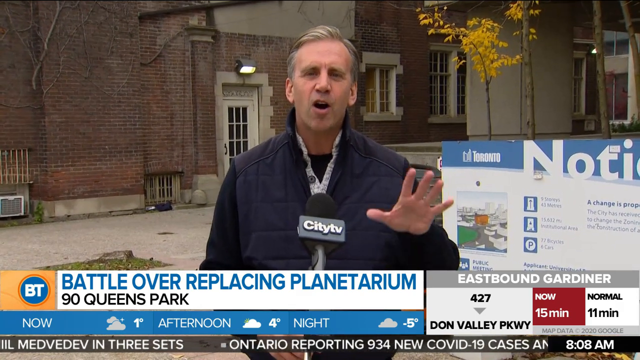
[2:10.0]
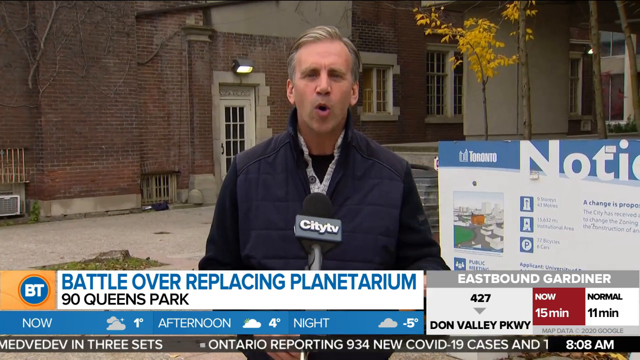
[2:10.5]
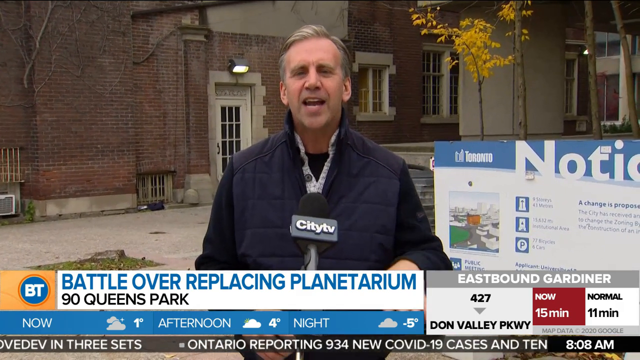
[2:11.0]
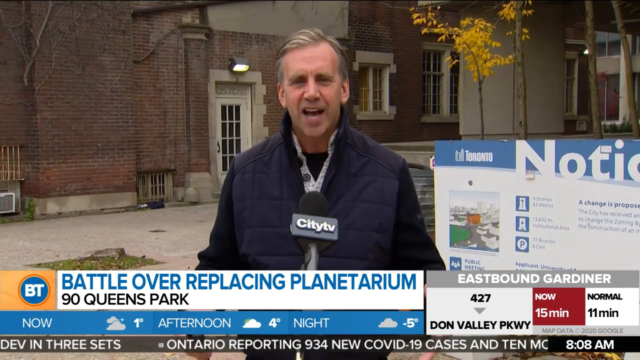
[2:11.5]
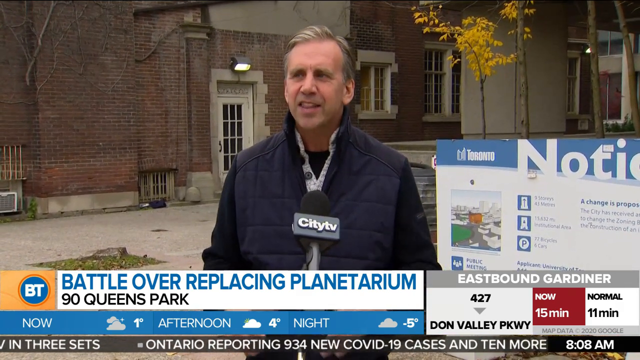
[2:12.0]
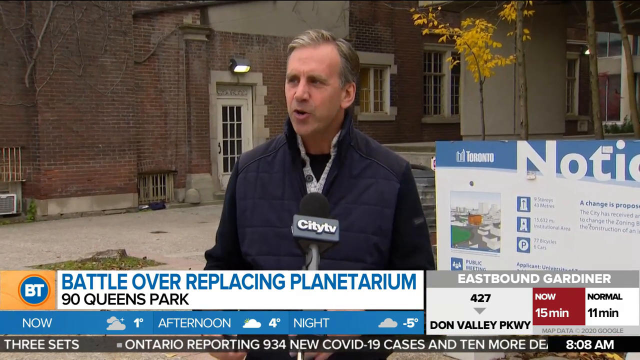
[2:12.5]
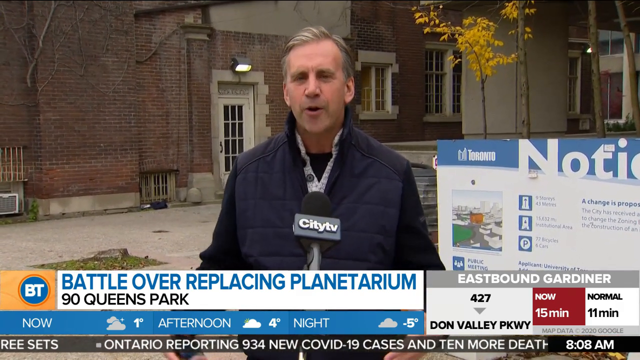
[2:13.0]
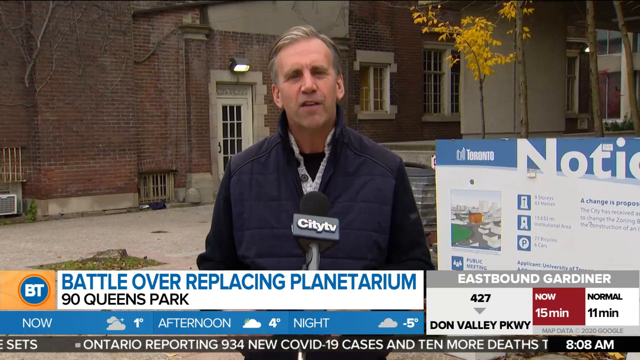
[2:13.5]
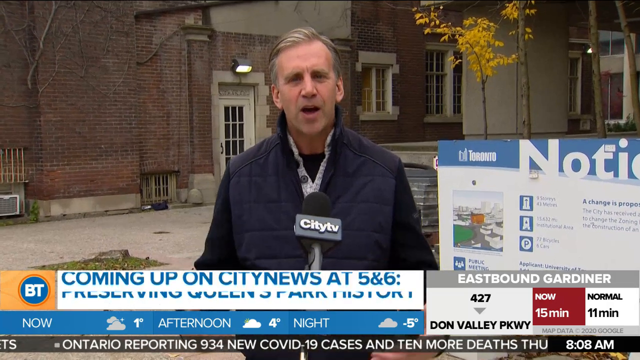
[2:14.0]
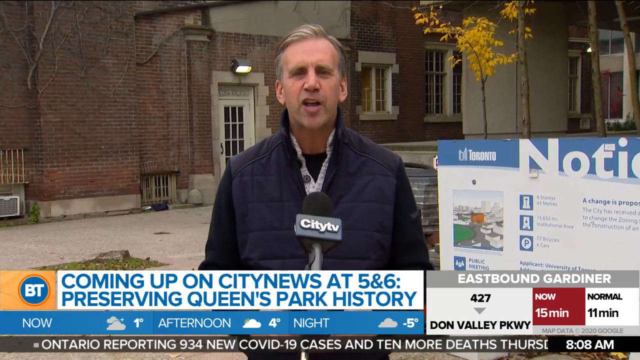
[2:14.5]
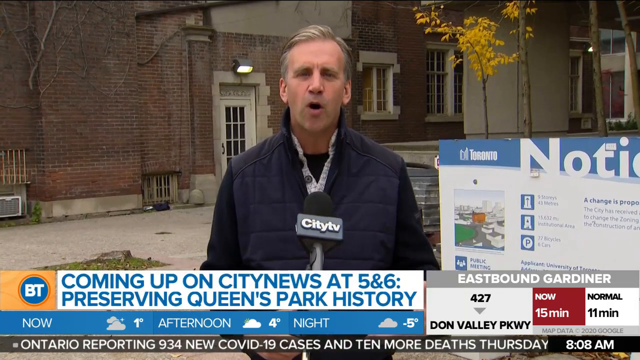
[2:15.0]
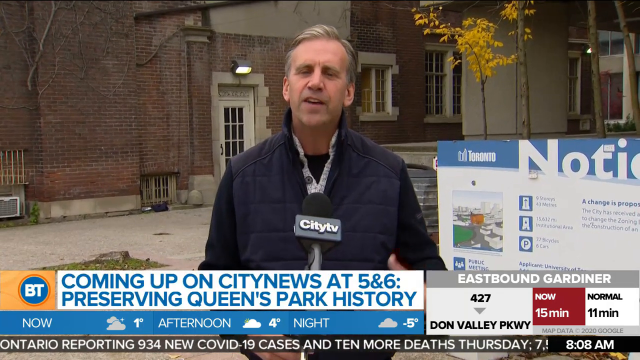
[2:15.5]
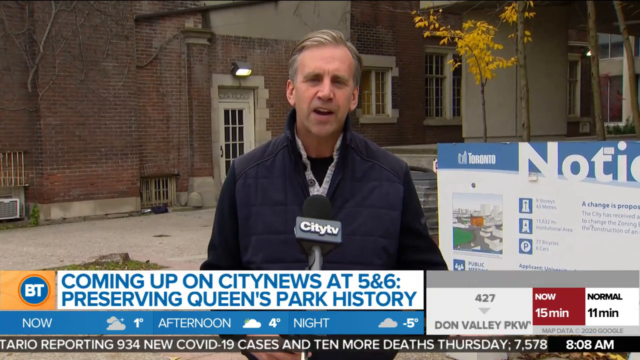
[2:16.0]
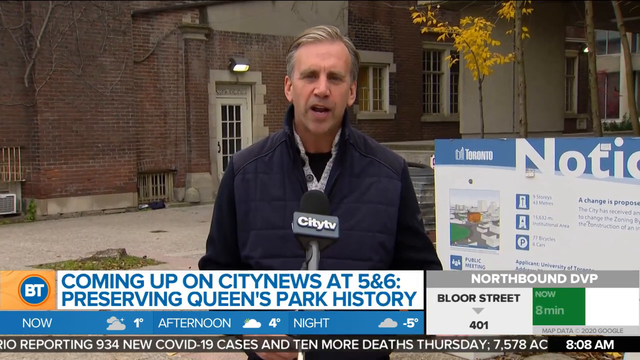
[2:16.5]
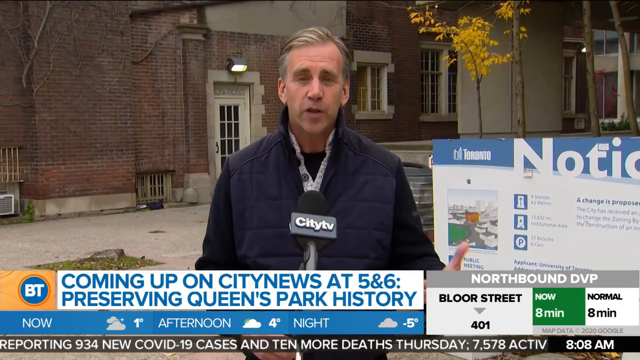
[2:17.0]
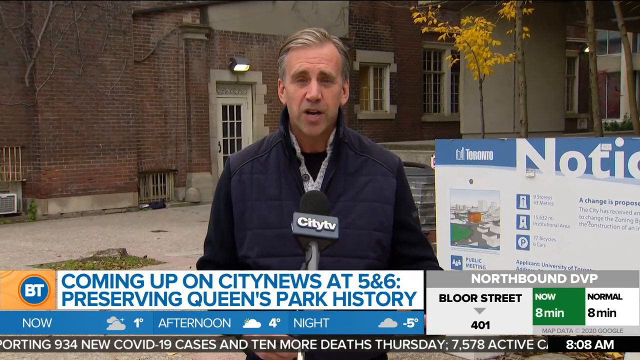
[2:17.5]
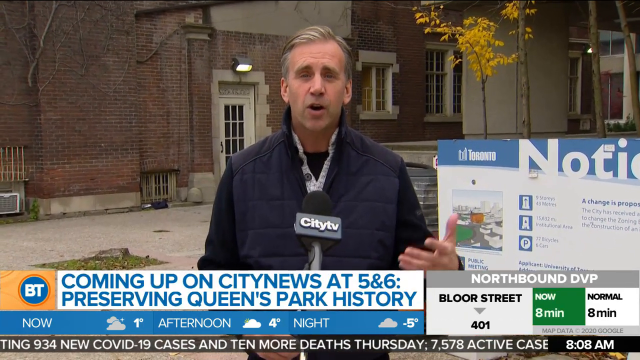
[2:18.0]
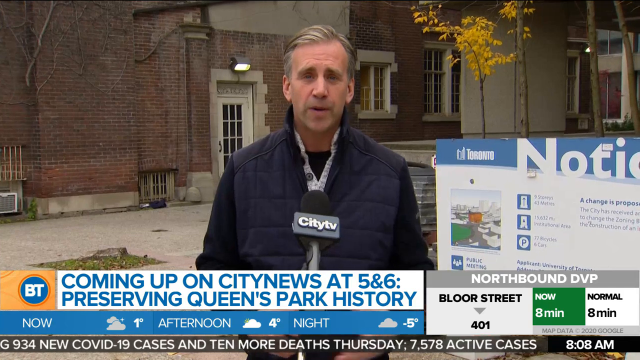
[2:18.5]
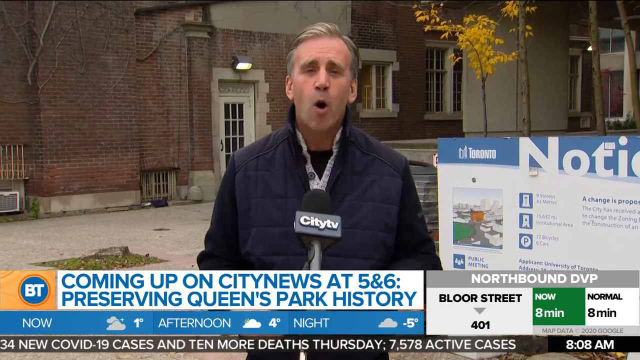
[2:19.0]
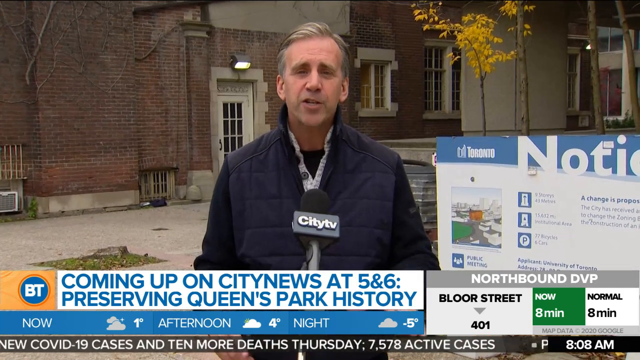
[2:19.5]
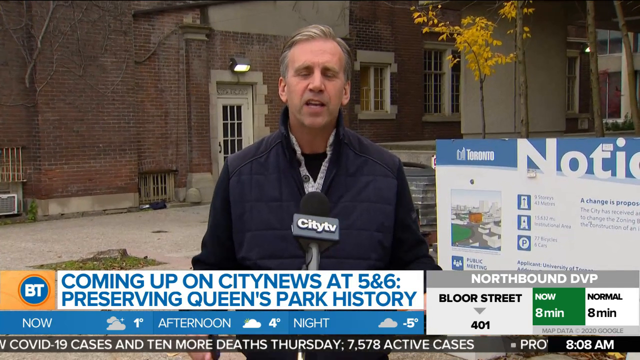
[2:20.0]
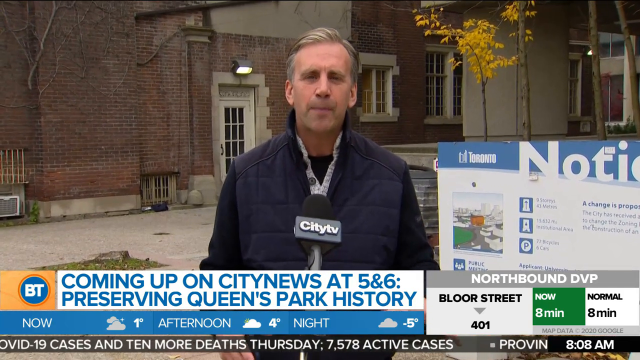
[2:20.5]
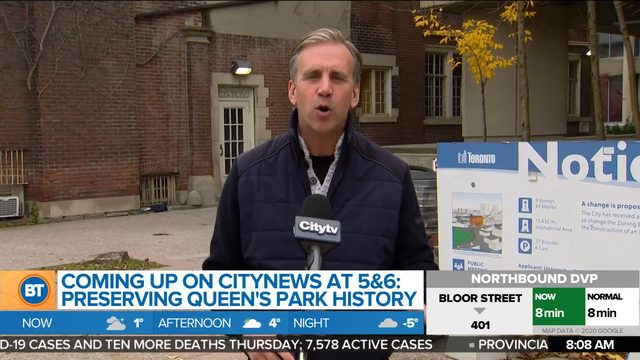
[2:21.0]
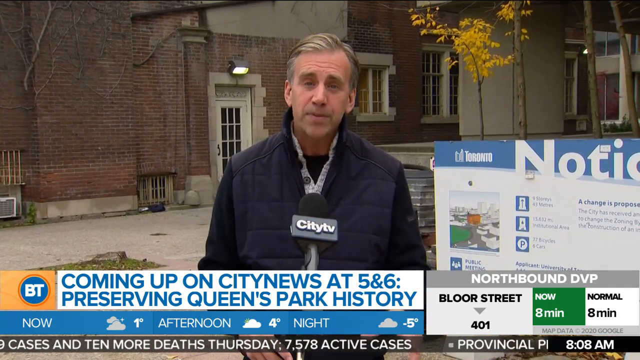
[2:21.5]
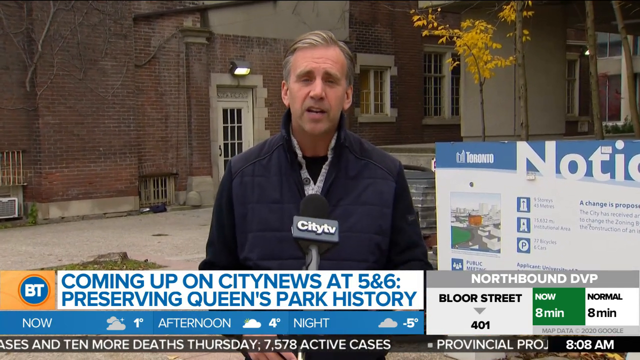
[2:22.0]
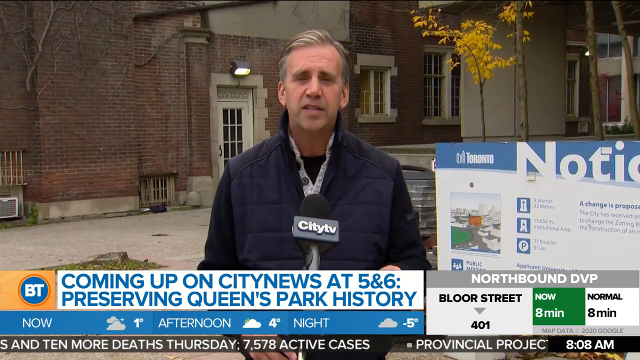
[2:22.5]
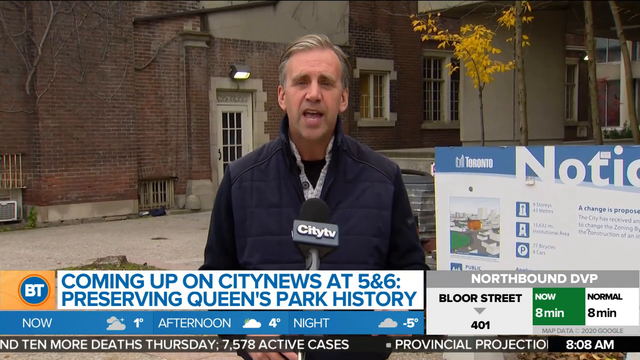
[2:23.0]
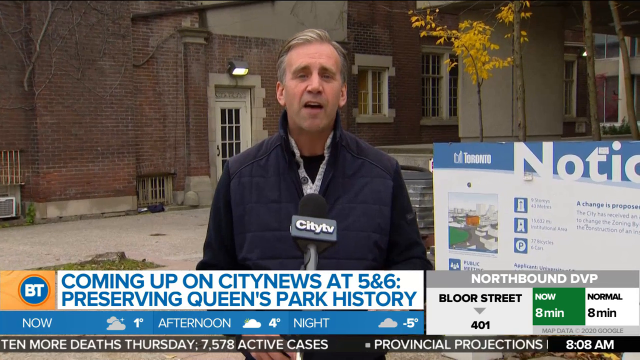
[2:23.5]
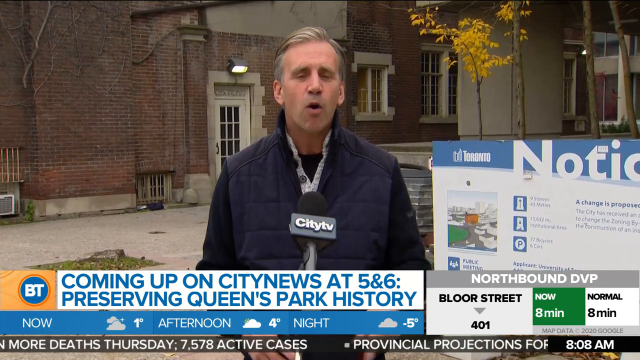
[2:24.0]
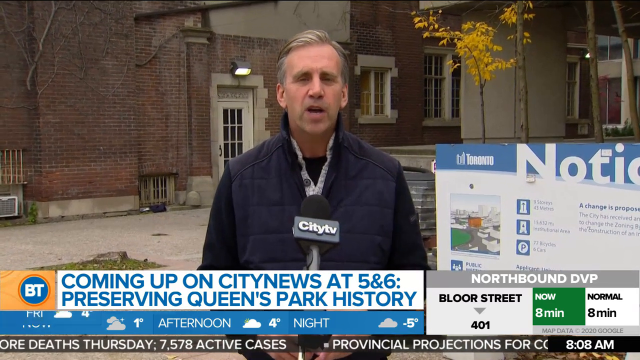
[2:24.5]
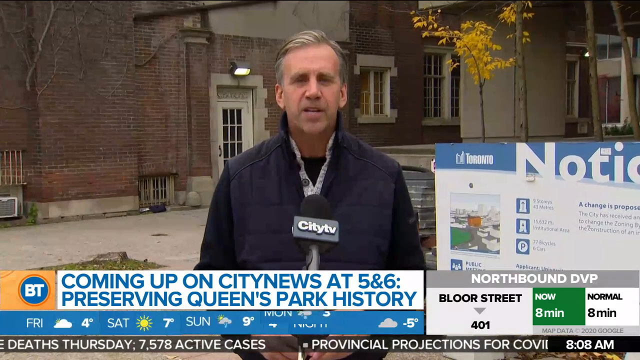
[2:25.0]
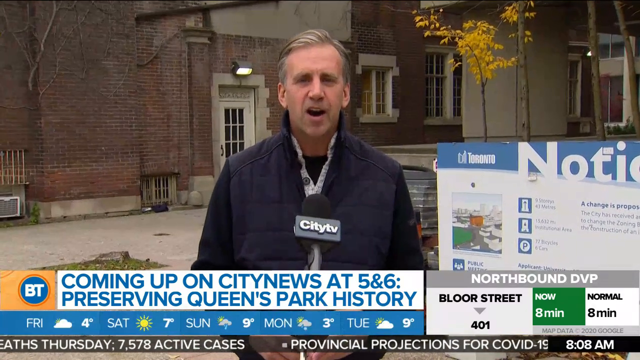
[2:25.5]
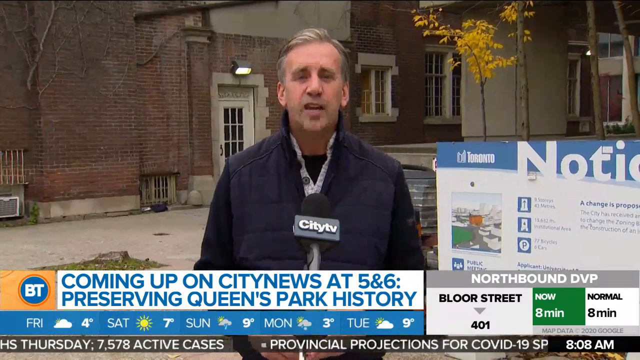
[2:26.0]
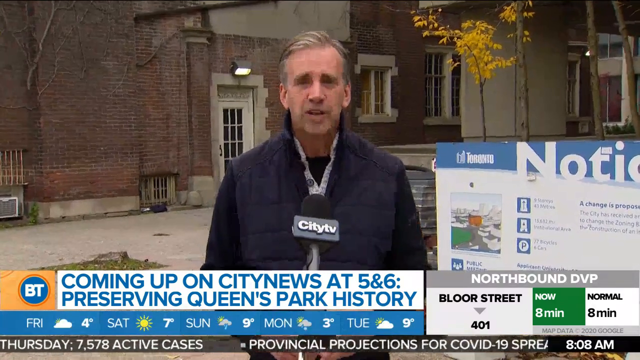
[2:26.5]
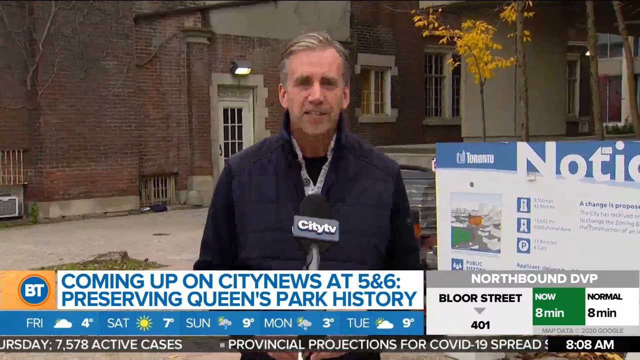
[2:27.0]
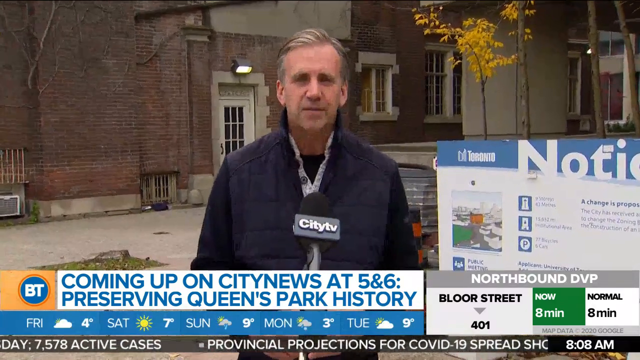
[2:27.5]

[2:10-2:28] The male presenter is in front of the building with the poster reading "notice" behind, explaining what is happening. Text on screen says "coming up on City News 8, 5 and 6" along with "preserving Queen's Park history." Pictures of the area of the building are shown, and the weather forecast is shown at the bottom of the screen.